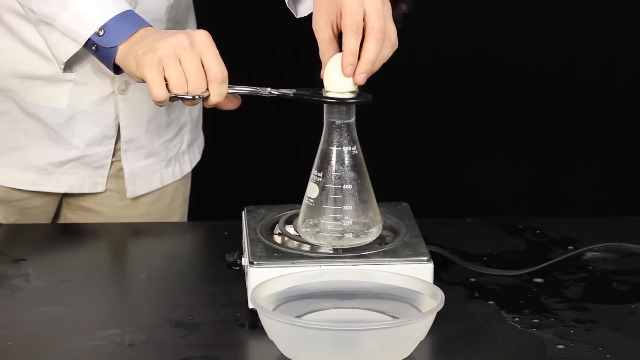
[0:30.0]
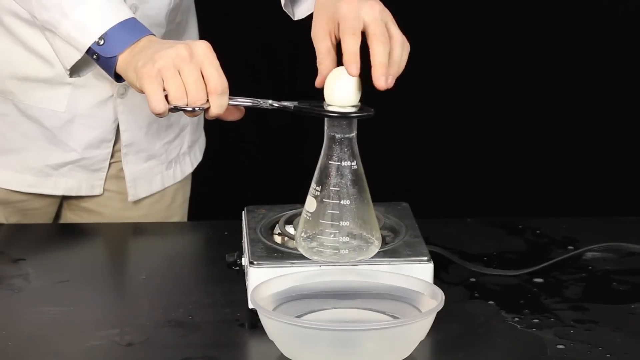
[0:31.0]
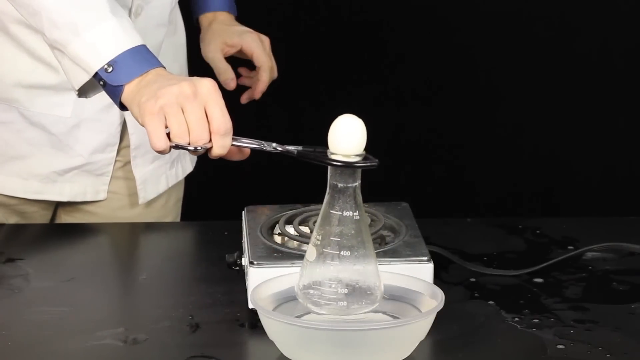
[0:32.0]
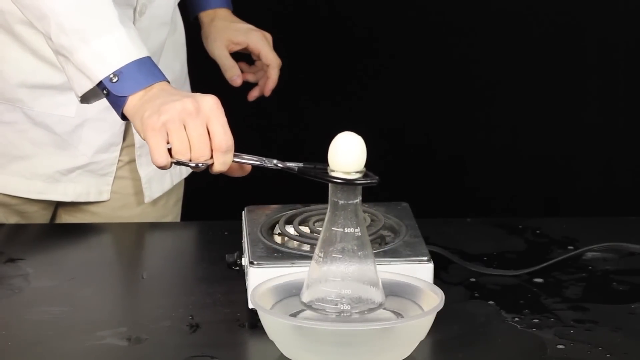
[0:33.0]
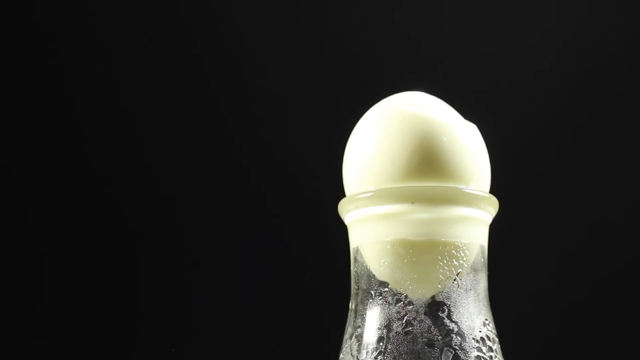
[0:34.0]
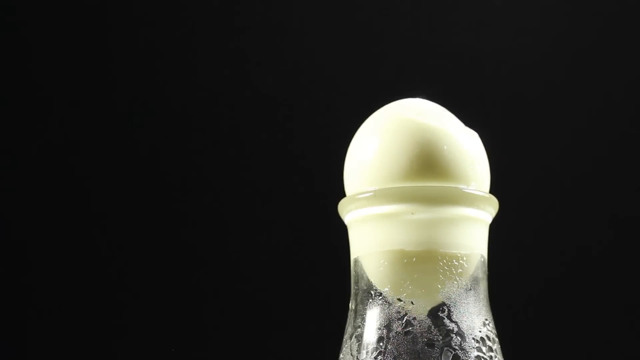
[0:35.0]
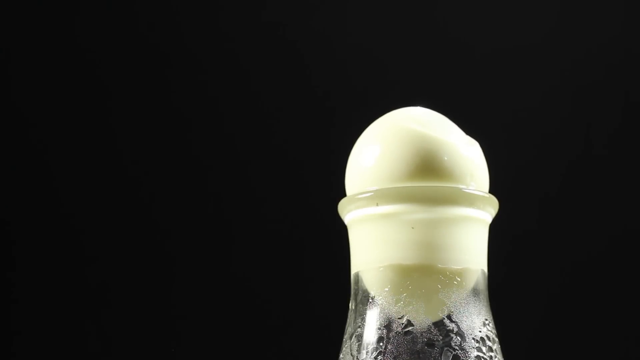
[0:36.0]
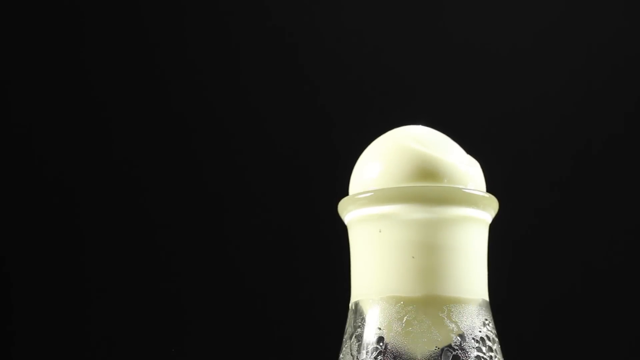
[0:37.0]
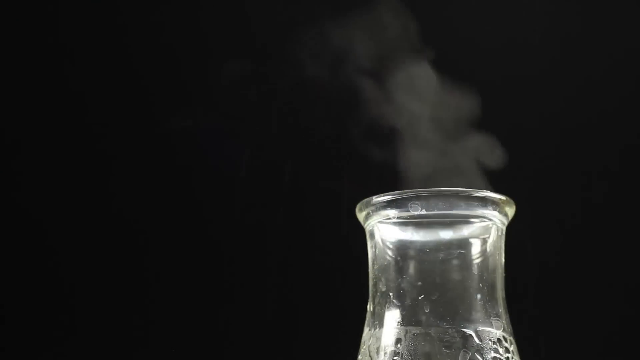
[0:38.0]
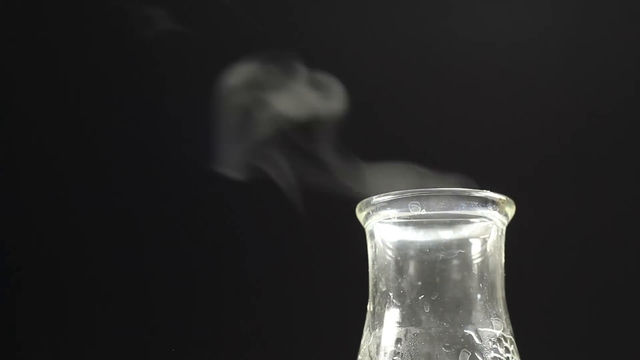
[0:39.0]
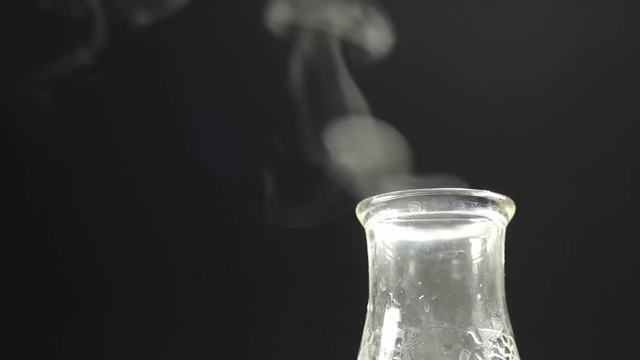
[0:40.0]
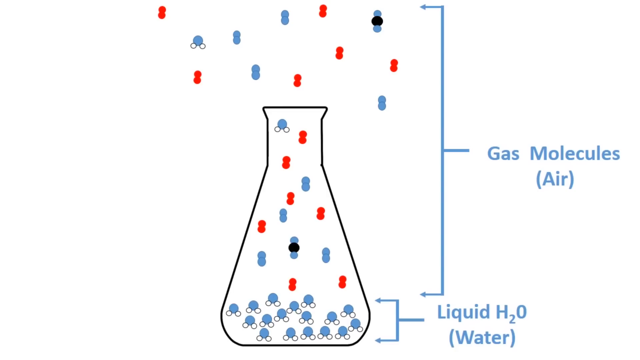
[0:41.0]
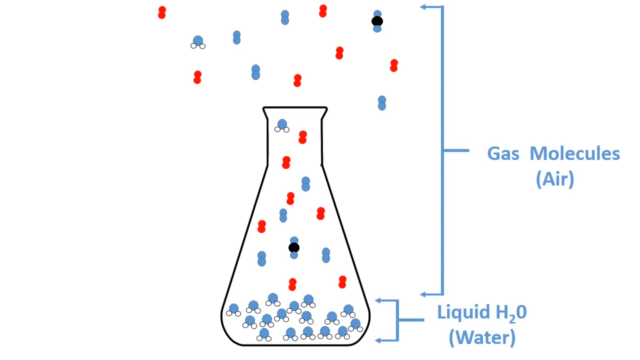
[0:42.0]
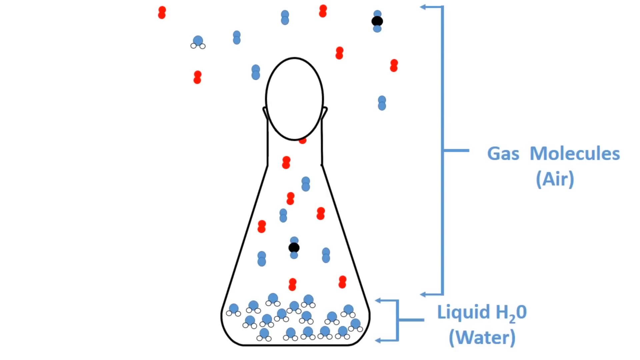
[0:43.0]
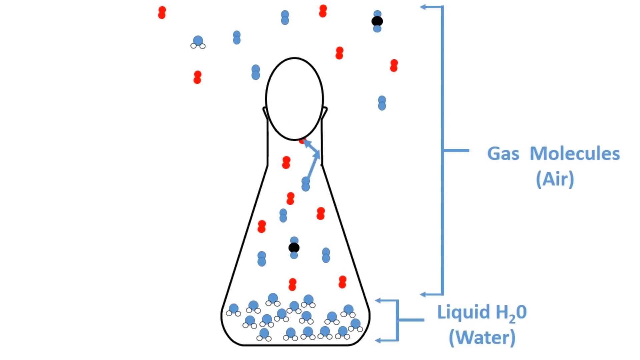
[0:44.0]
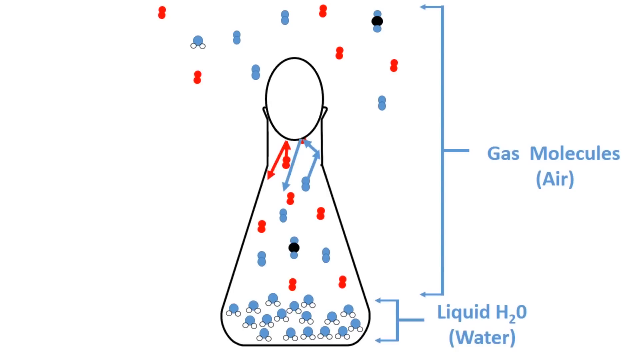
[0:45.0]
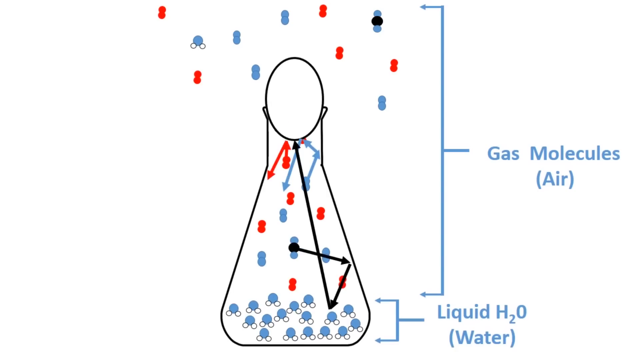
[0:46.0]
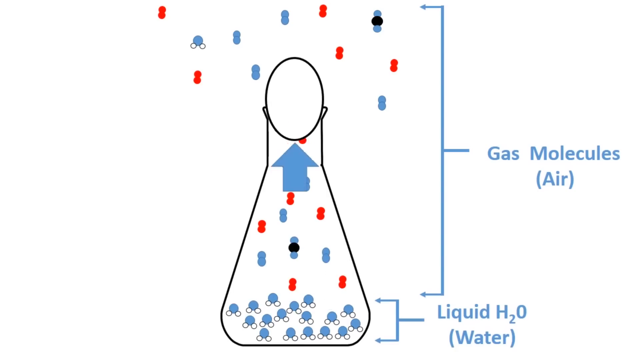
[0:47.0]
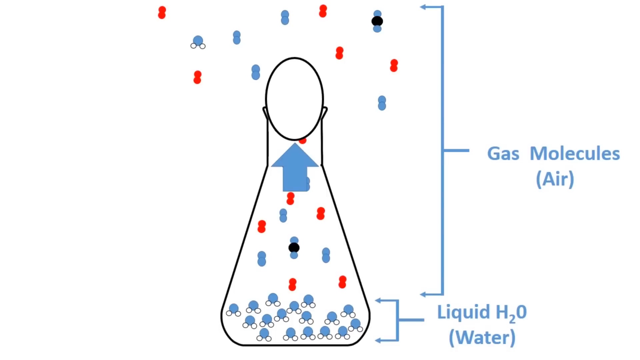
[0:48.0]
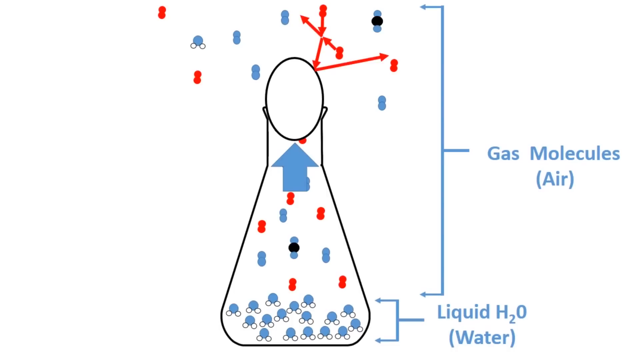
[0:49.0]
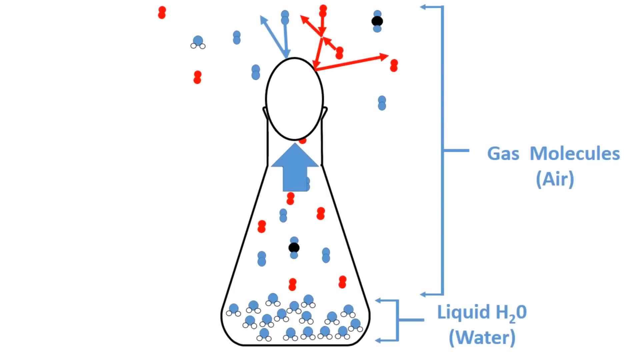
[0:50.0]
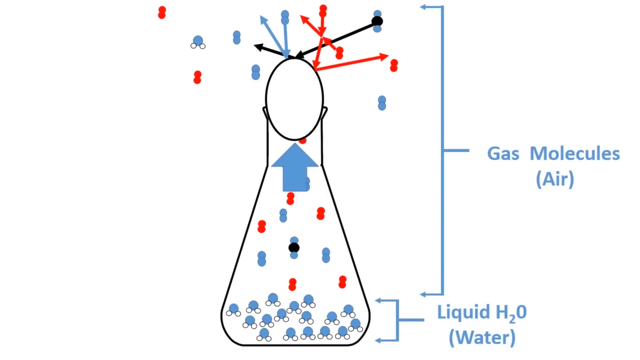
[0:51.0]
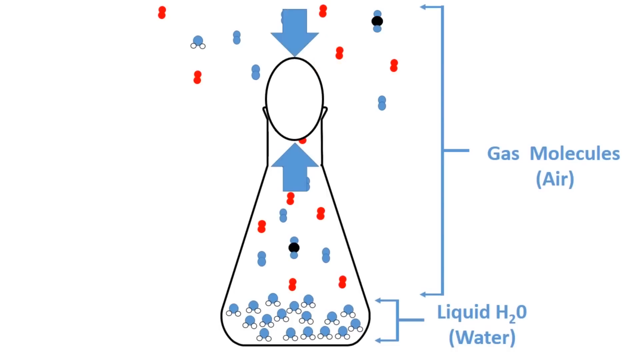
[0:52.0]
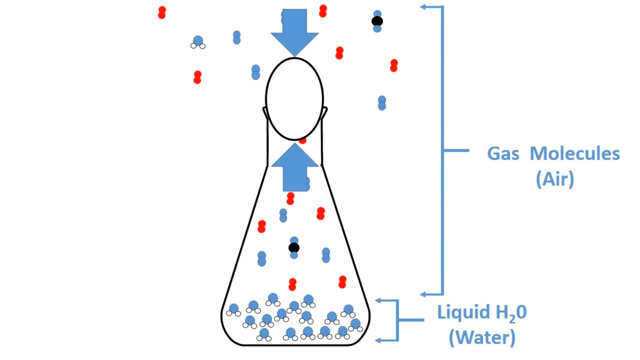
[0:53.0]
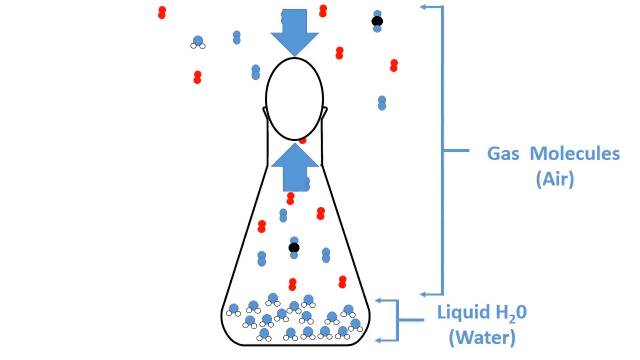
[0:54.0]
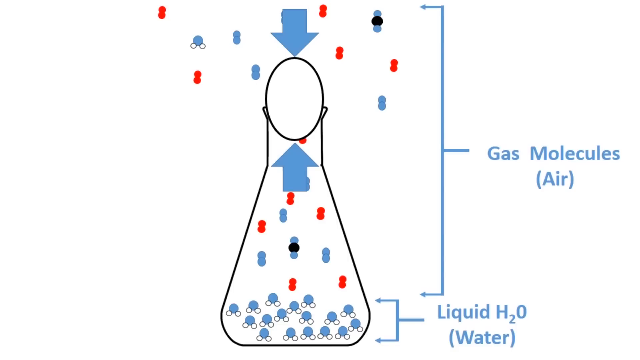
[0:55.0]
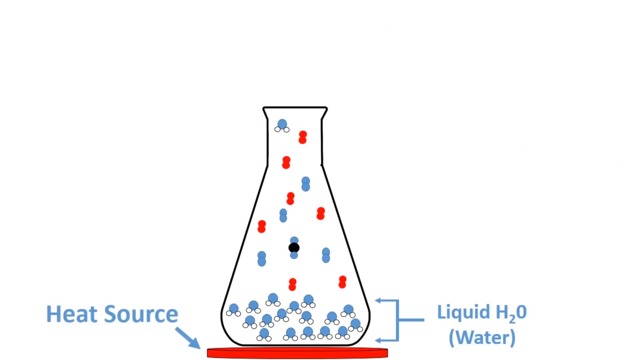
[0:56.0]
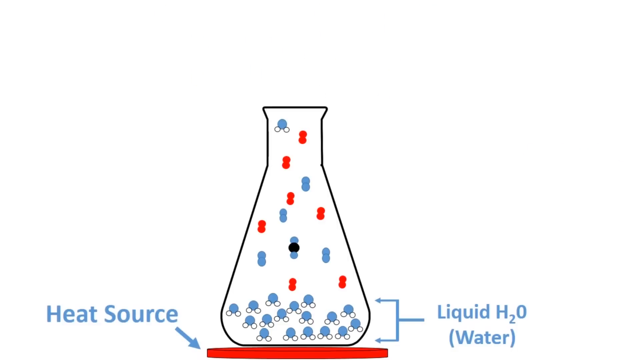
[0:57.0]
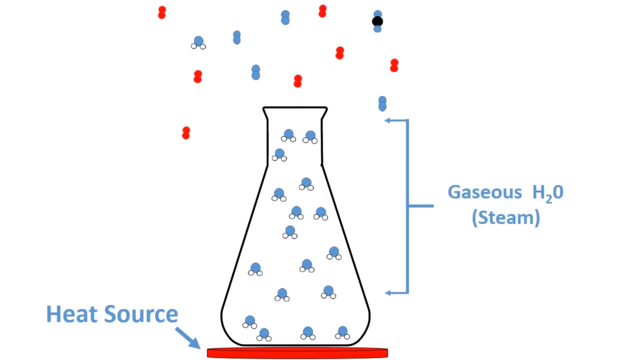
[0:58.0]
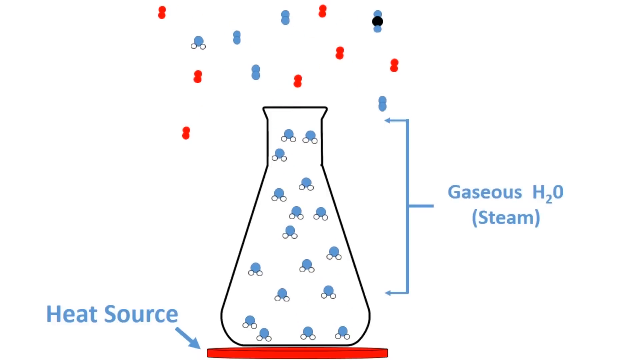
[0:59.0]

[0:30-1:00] A man holds the top of a glass beaker with tongs in his right hand while his left hand places an egg in the narrower opening of the beaker. He lifts it with the tongs and sets the beaker in a pan of water. The camera moves to a close-up of the egg beginning to thin and slip through the top of the beaker; some steam comes out after it has slipped through. Next comes a drawing of a beaker with gas and liquid molecules denoted by red dots and blue dots. On the right-hand side, a blue line is labeled "gas molecules air", and below that it says "liquid H2O molecules water". Arrows in red, blue and black ink appear, indicating the motion of the molecules, and two large blue arrows illustrate the egg. The next shot shows the heat source in red beneath the beaker, with "gaseous H2O steam escaping" written on the left.